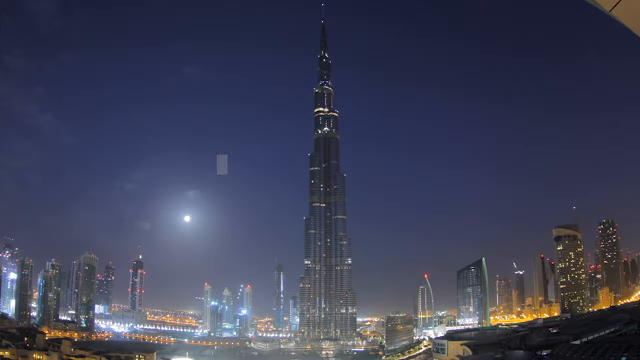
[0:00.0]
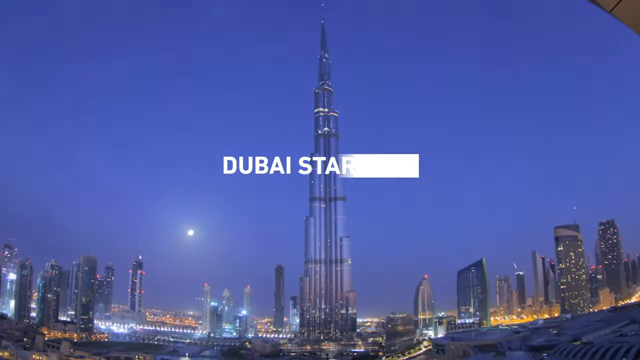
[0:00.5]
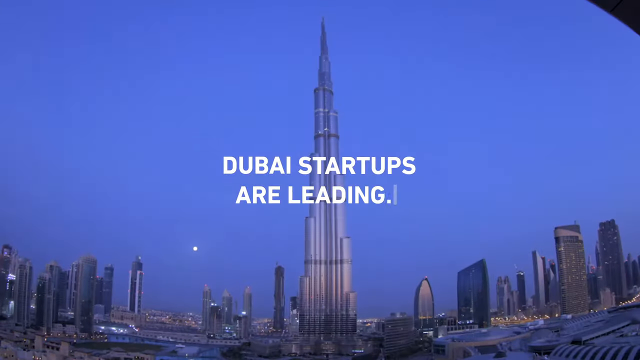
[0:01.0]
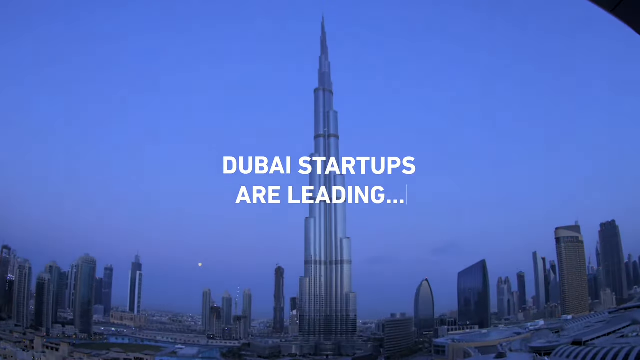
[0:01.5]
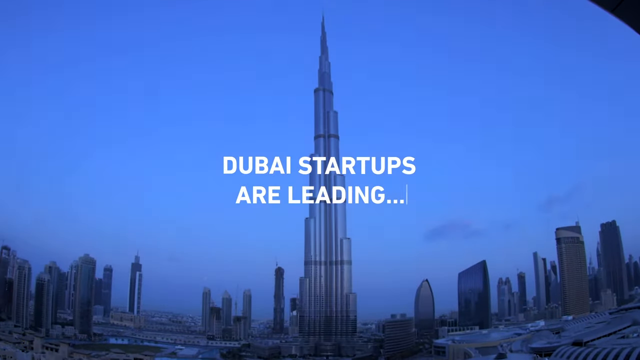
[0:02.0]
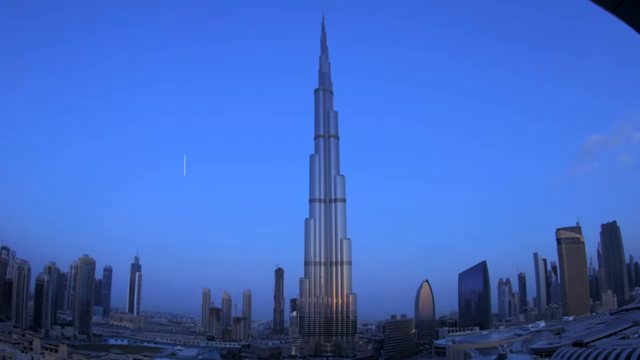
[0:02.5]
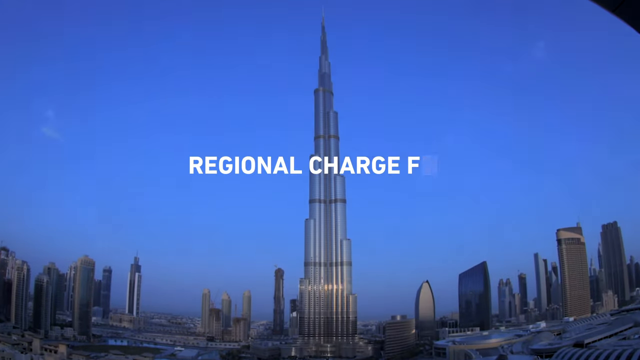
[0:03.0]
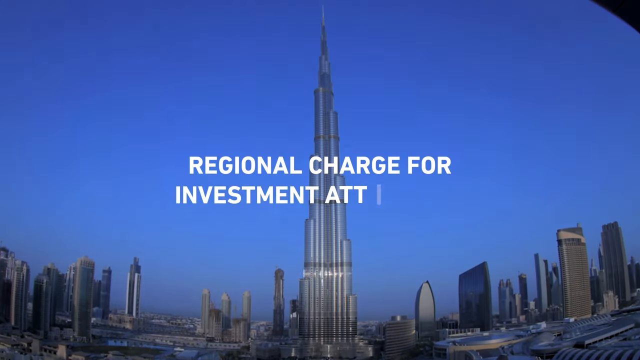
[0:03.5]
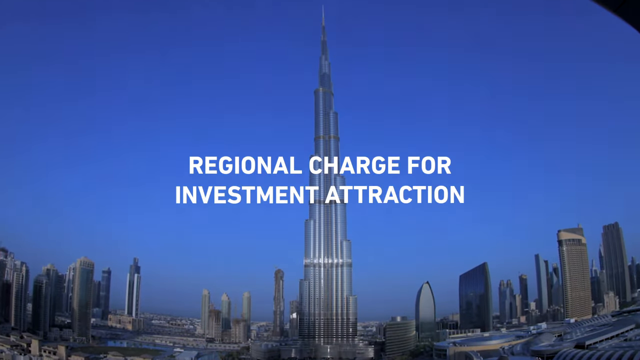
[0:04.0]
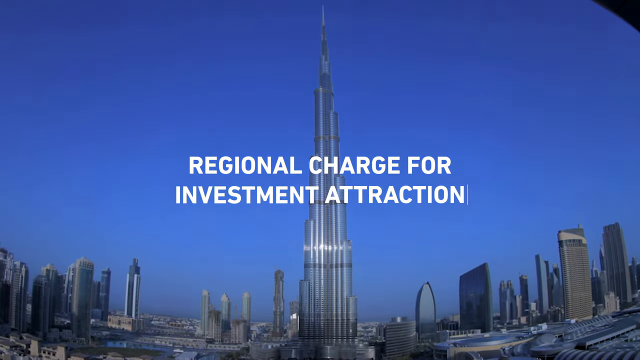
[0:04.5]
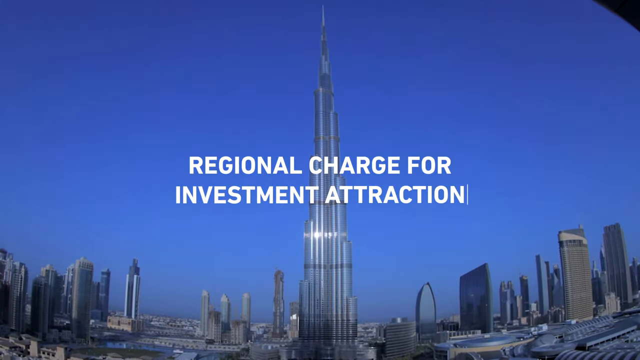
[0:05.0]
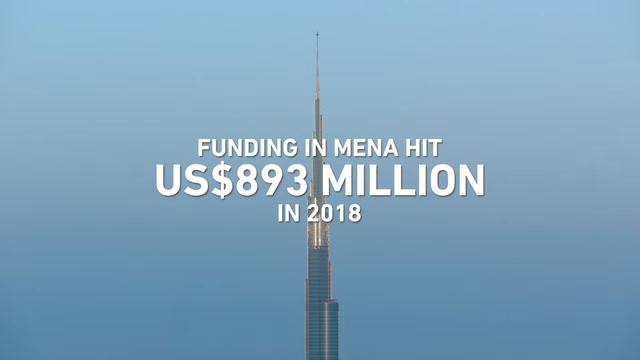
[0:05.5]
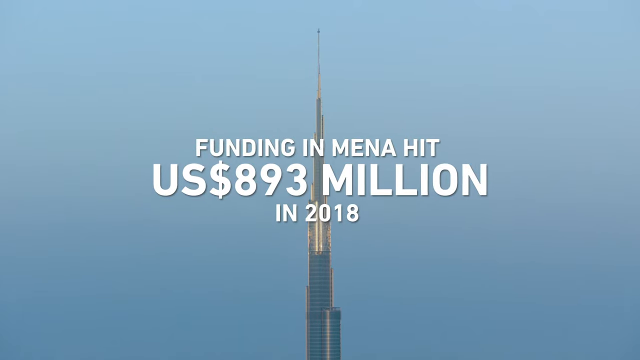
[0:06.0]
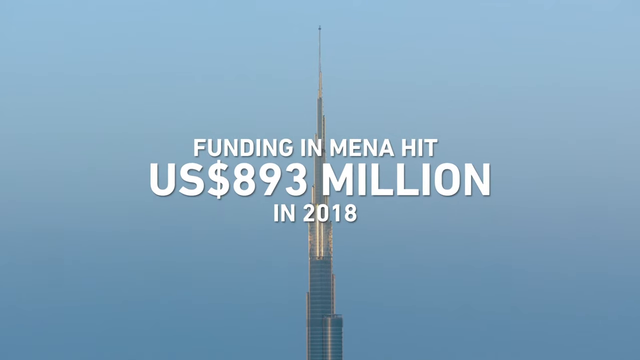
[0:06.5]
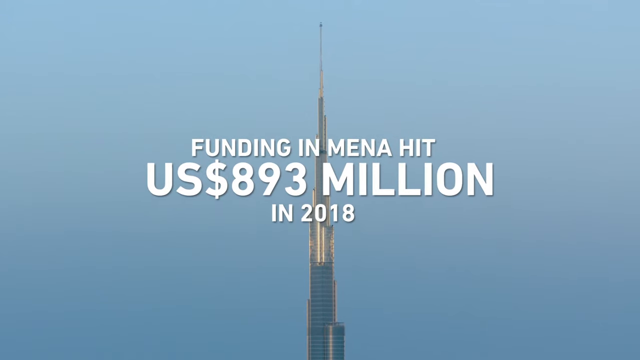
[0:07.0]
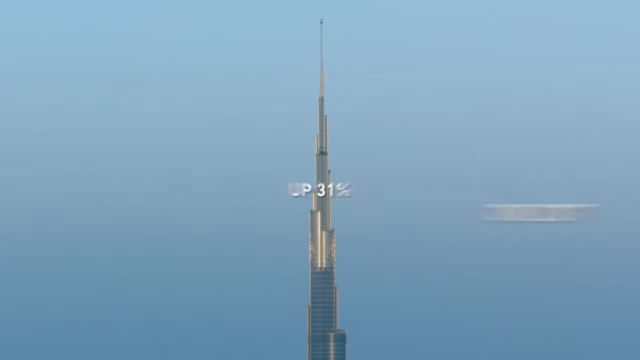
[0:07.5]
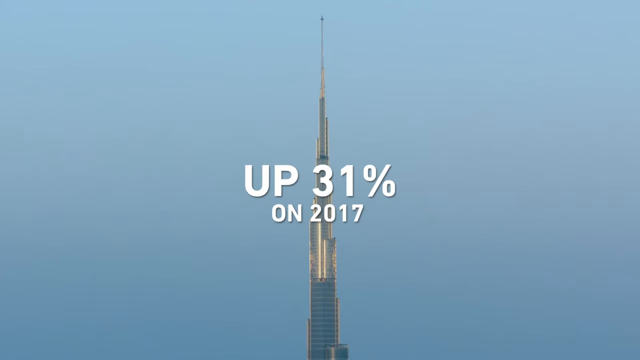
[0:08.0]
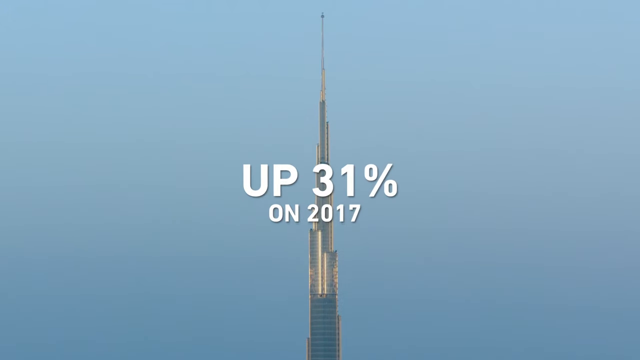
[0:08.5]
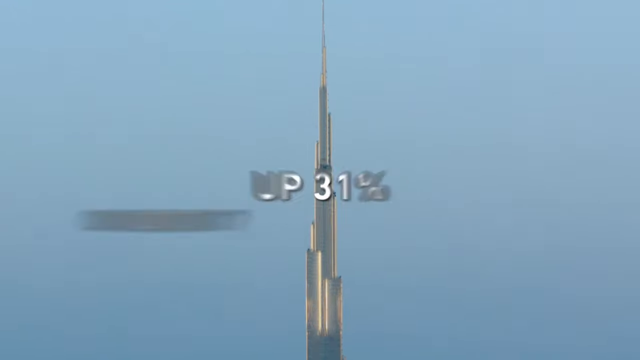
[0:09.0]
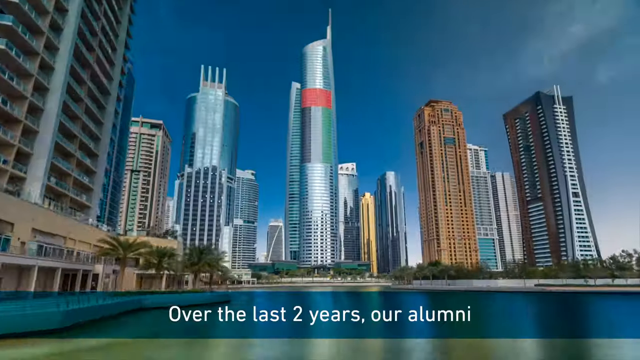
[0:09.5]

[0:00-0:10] The Burj Khalifa is shown, placing the video in Dubai. Text reads "Dubai startups are leading regional charge for investment attraction," followed by "funding in MENA hit US $893 million in 2018, up 31% on 2017." Then "Over the last two years, our alumni" appears and trails off as the shot cuts off.